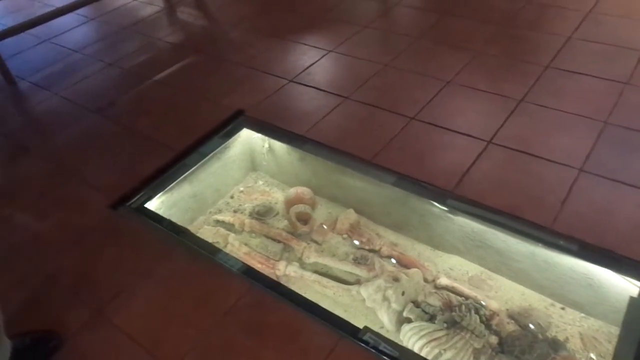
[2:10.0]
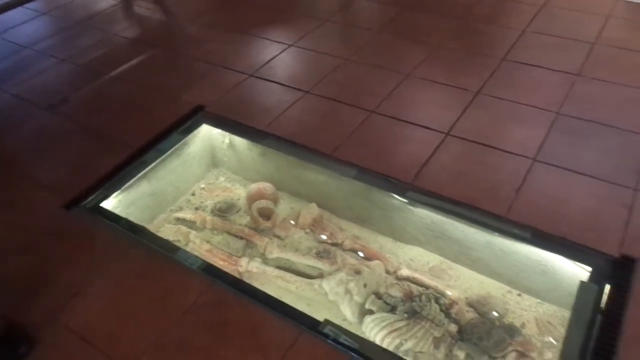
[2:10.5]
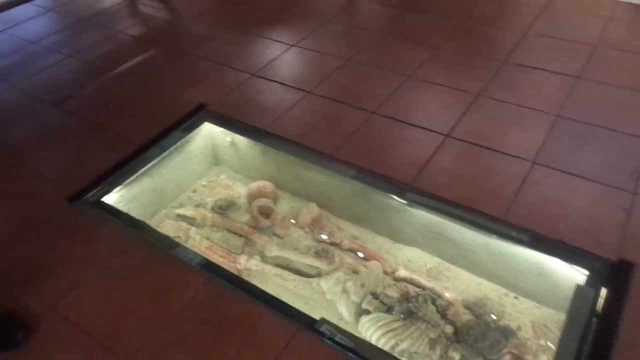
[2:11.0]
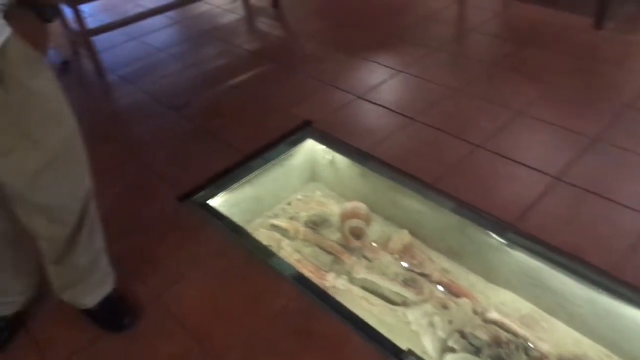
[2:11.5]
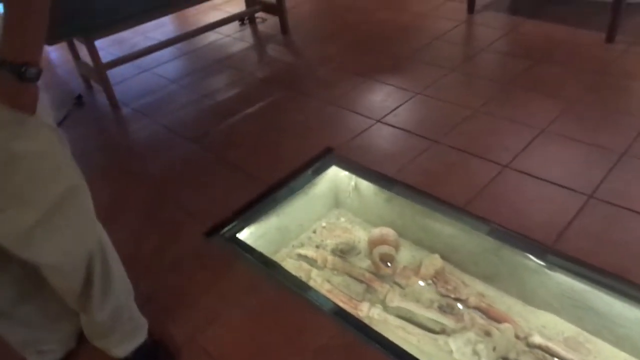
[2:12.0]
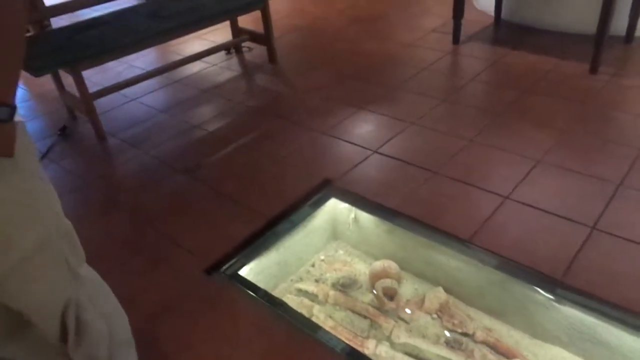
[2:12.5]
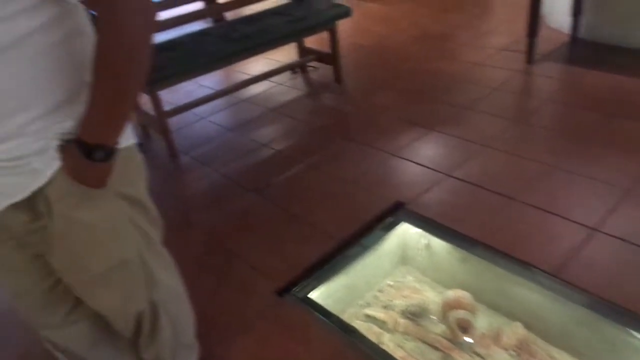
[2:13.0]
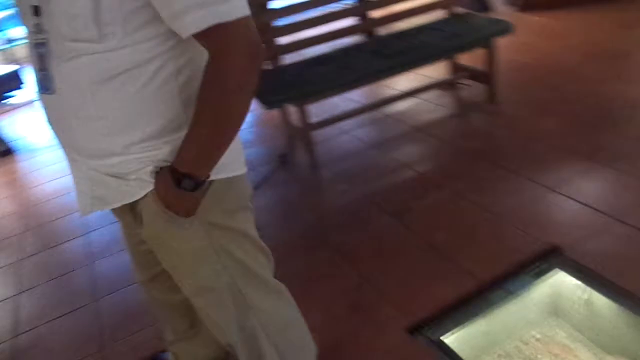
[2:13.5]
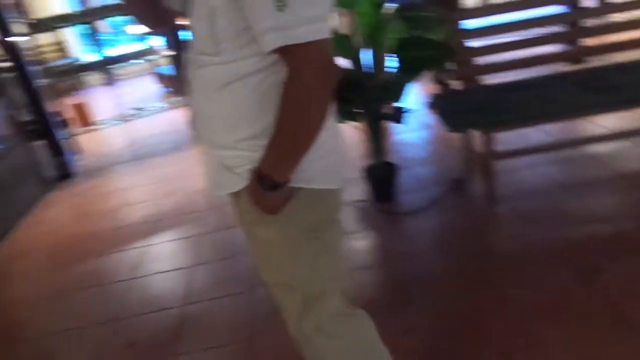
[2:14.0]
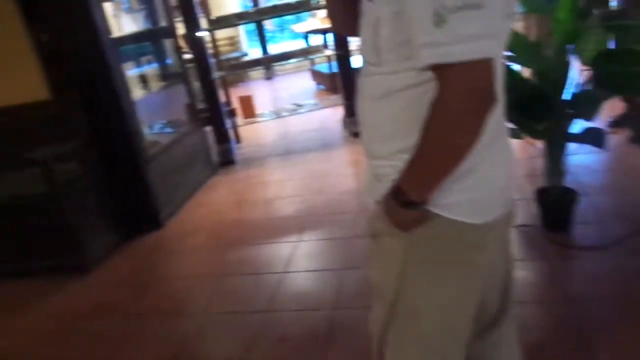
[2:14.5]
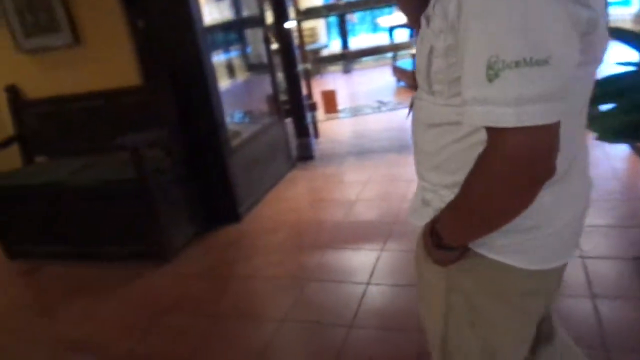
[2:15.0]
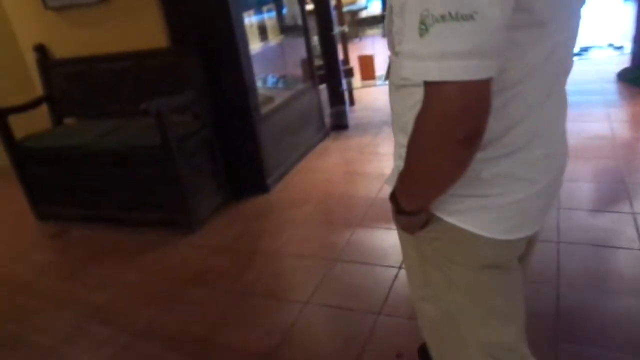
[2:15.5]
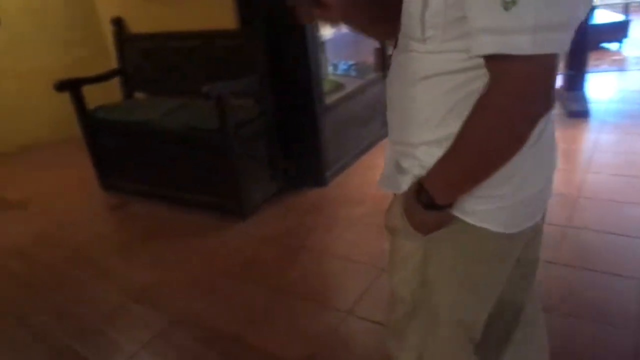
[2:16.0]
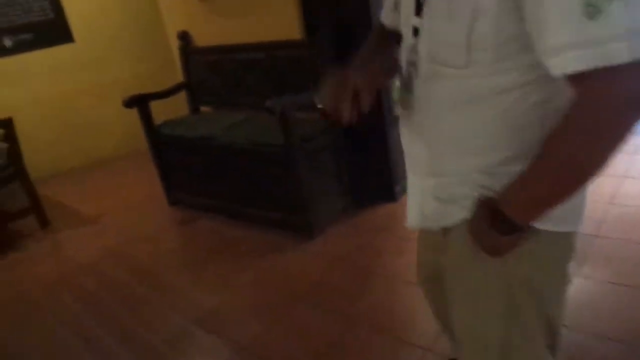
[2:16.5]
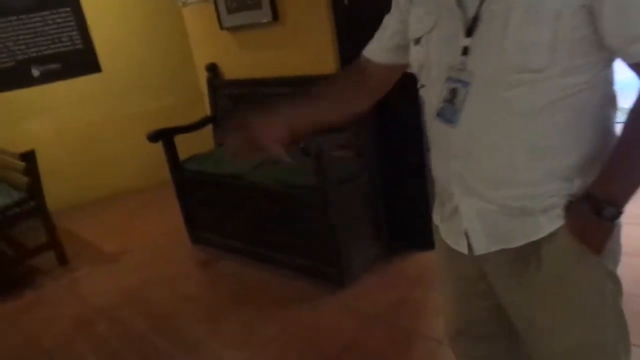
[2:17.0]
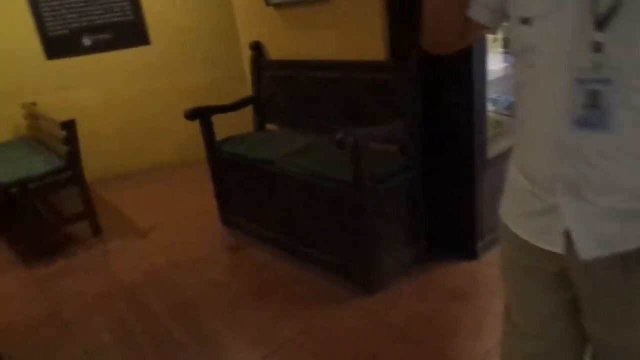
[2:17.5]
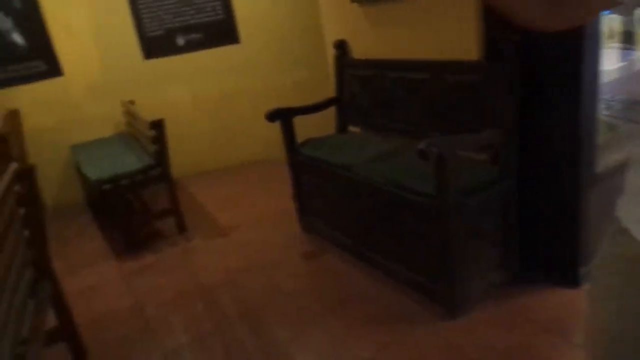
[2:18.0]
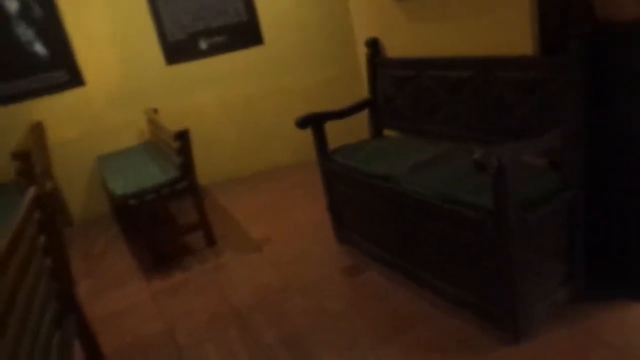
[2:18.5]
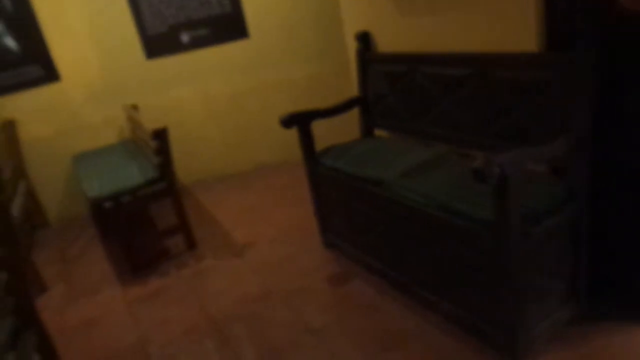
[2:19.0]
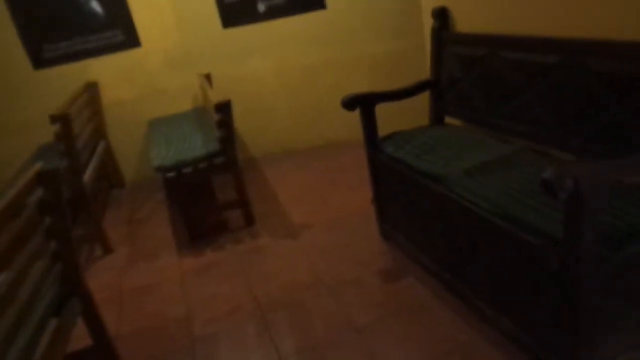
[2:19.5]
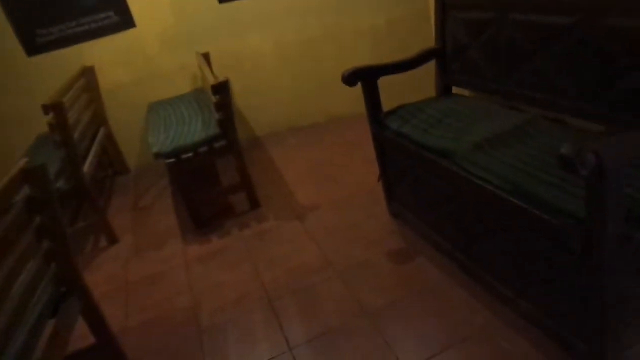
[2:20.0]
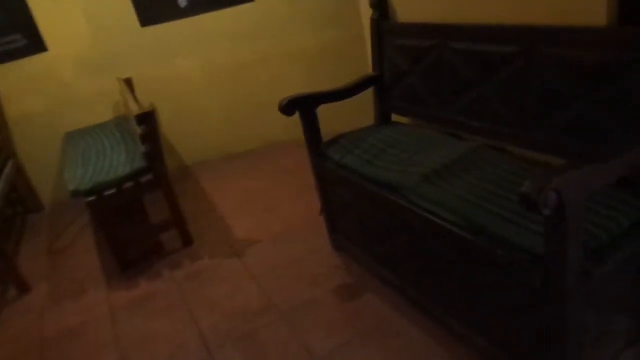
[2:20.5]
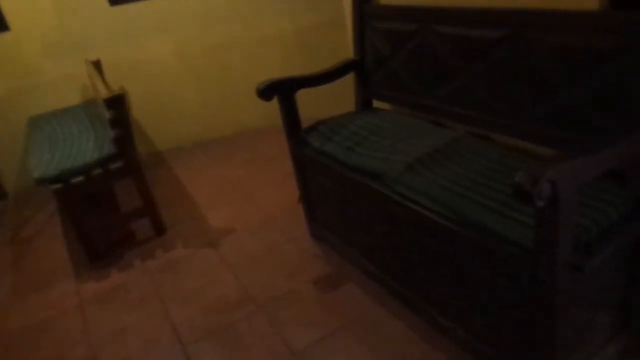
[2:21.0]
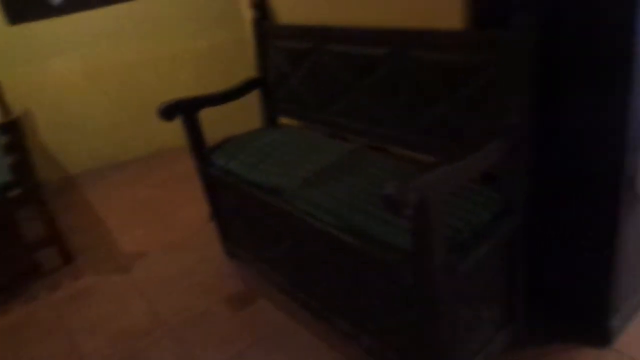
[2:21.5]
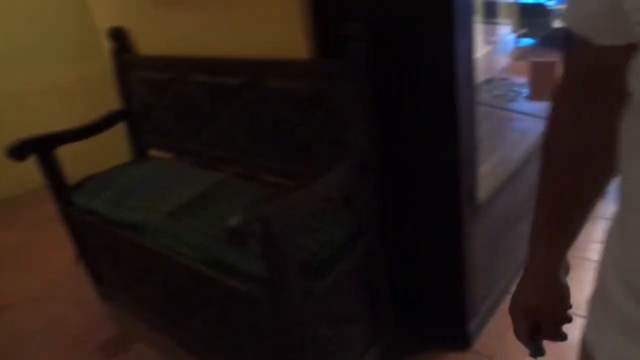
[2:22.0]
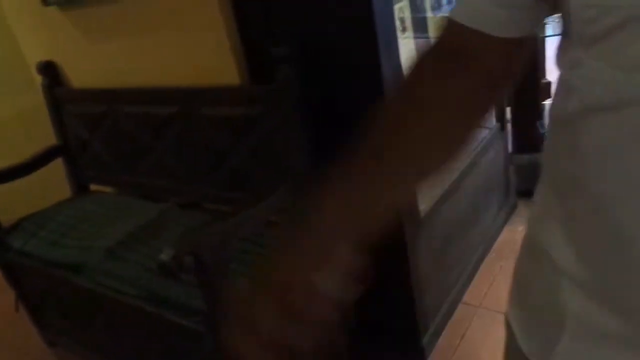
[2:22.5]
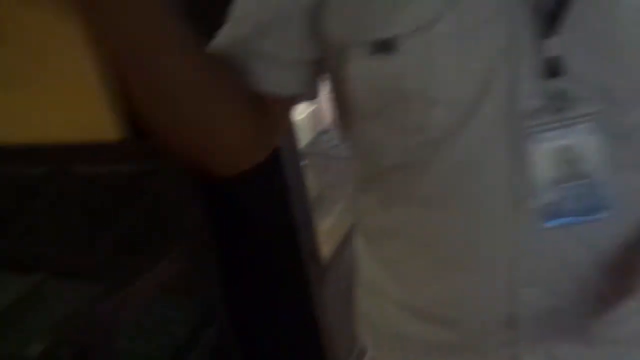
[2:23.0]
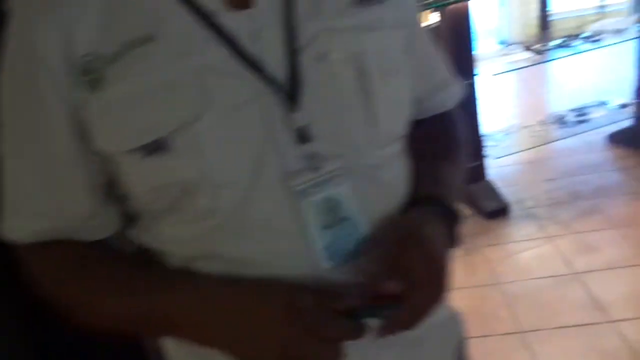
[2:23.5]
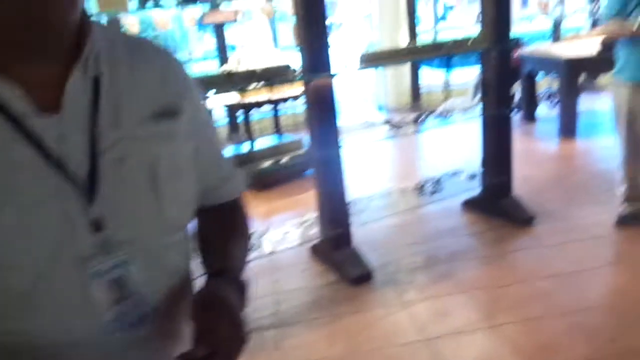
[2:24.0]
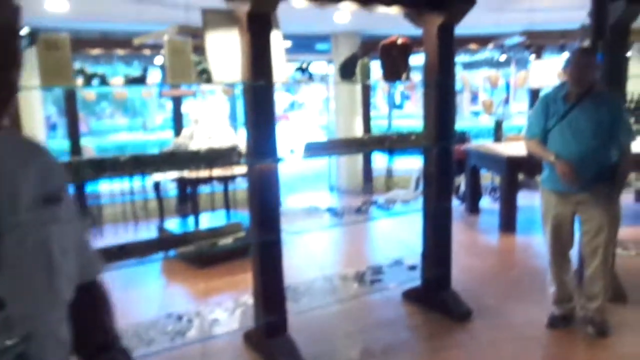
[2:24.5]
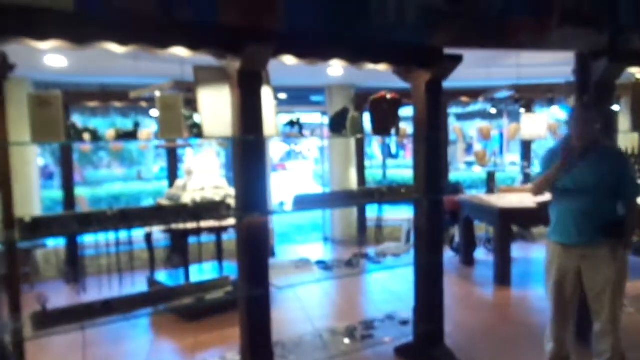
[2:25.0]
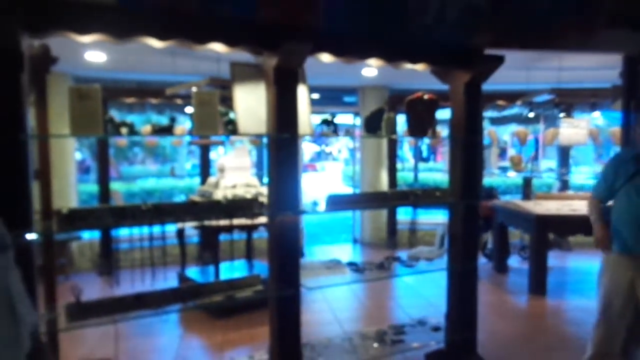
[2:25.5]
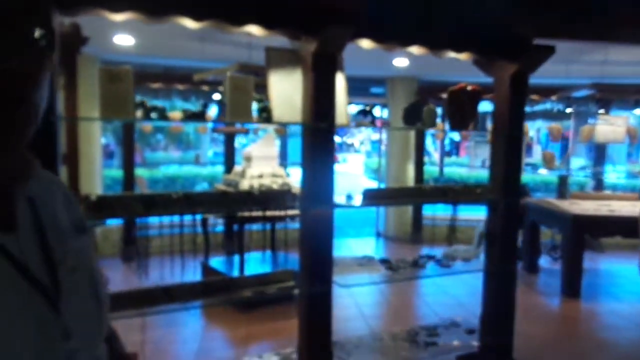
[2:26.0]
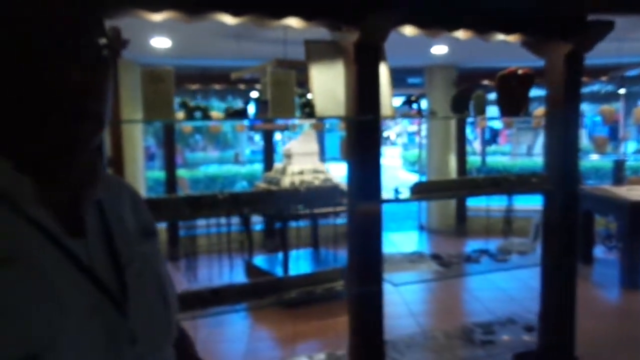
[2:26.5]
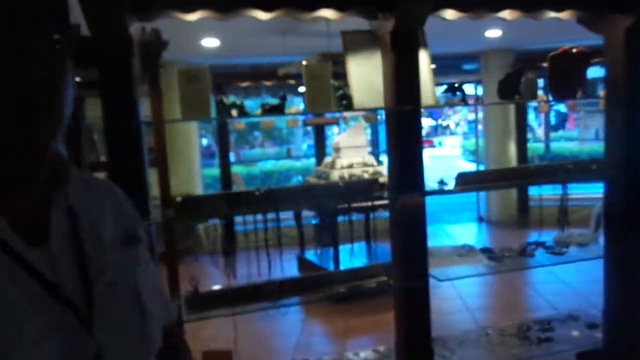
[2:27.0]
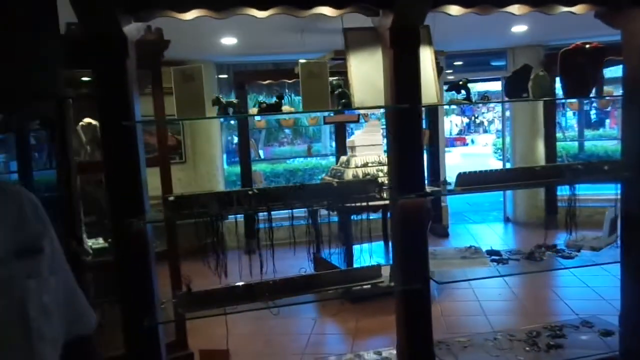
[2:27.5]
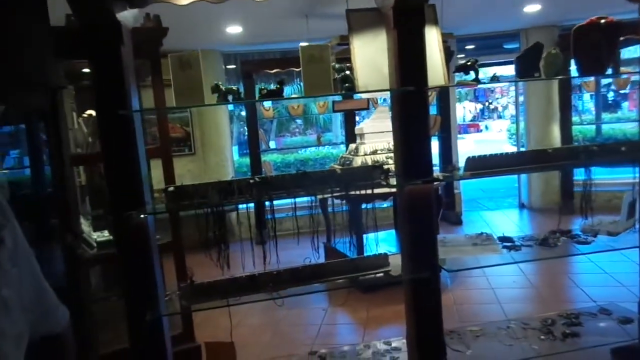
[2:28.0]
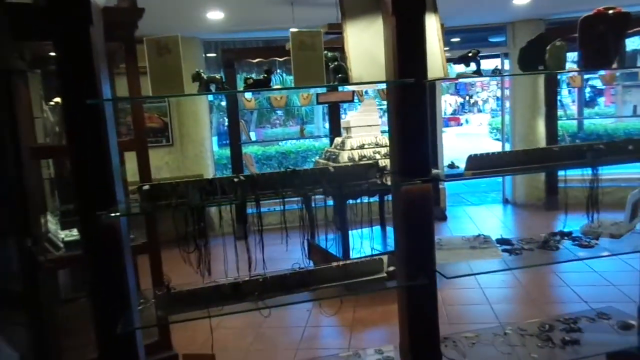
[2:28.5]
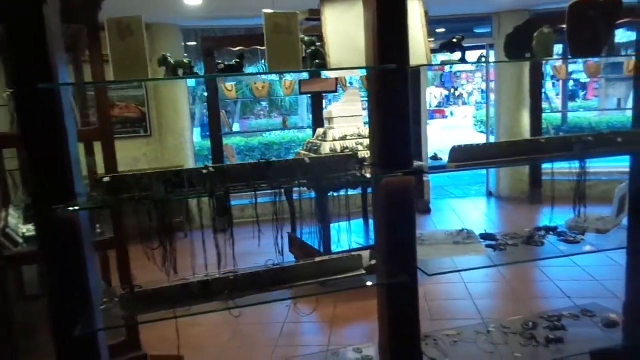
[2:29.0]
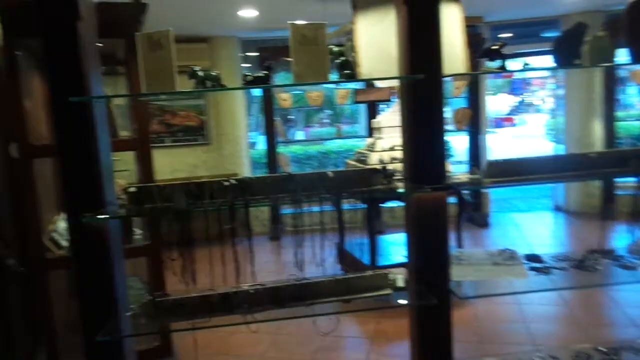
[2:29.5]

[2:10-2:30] The camera stays on the human skeleton in the floor; the floor has ceramic tiles of an almost burgundy color. The camera pans back, following the man, into a yellow-painted room with a lot of black. The chairs are kind of brown with green or black pillows, and there are black pictures or plaques on the wall, plus some green. The camera pans to show the outside, with a lot of blue and a couple of people to the right of the screen. Someone waves at the camera and points toward some lights and the outside.